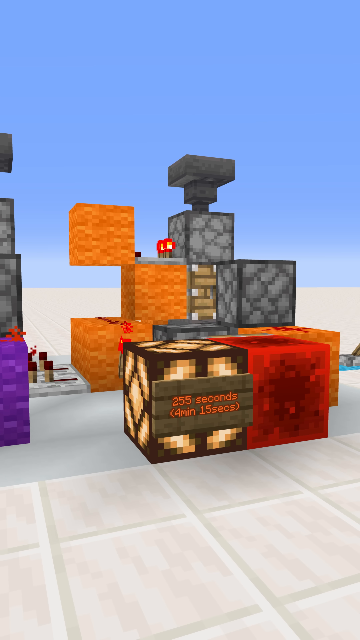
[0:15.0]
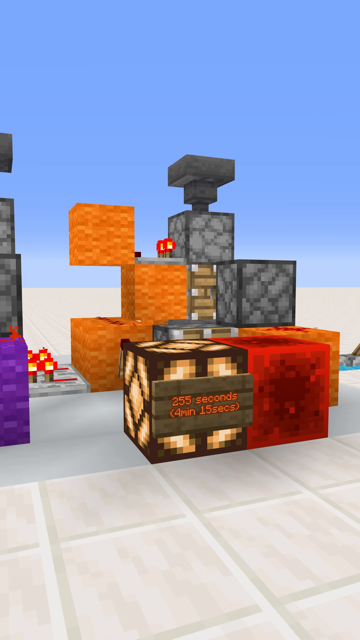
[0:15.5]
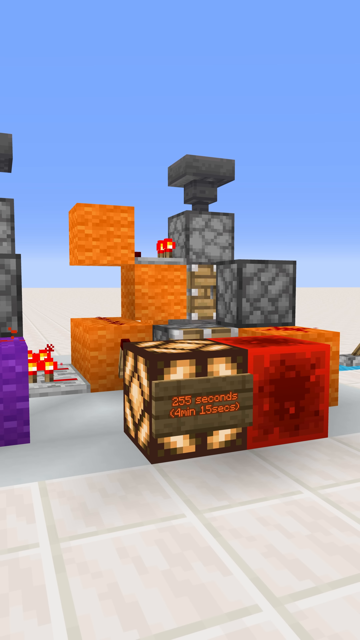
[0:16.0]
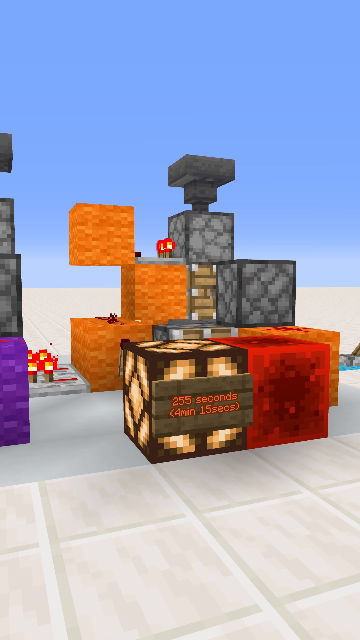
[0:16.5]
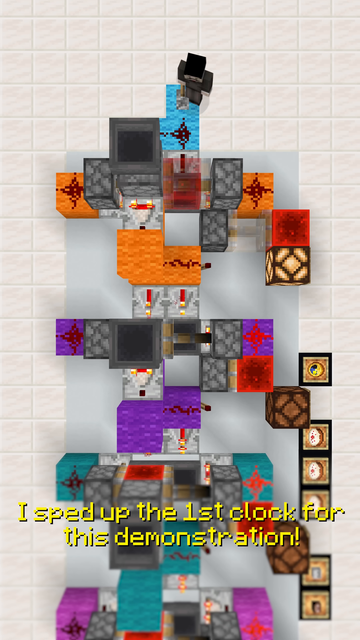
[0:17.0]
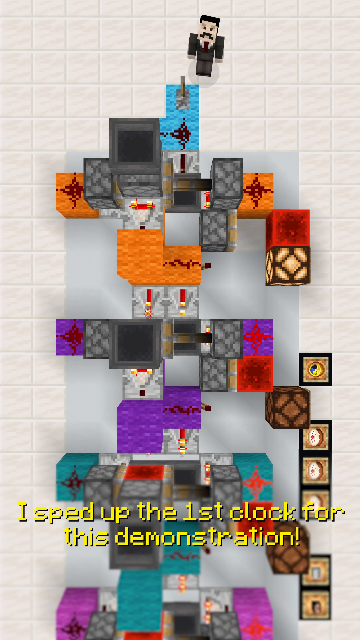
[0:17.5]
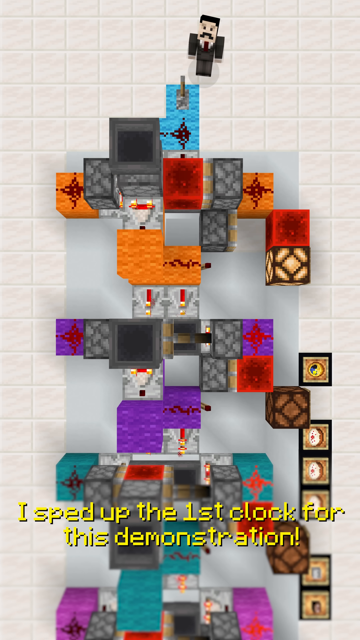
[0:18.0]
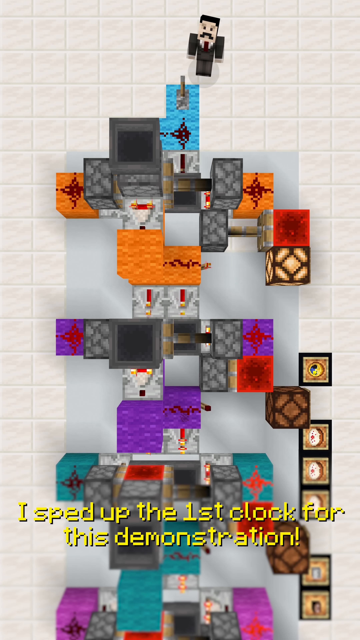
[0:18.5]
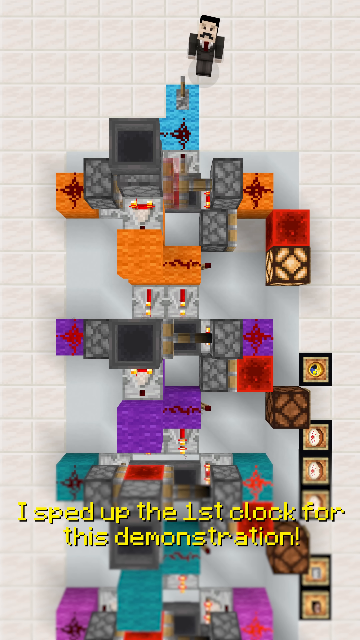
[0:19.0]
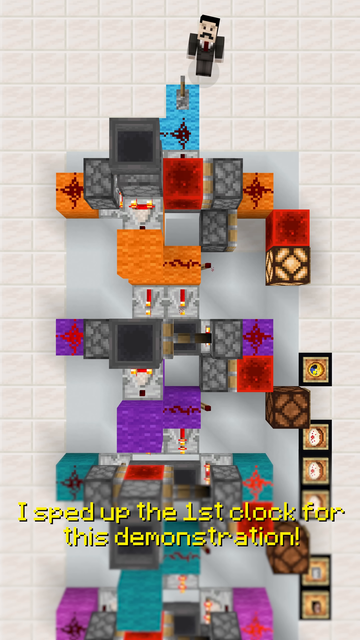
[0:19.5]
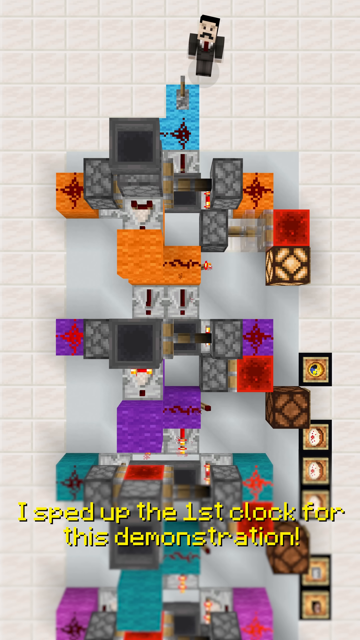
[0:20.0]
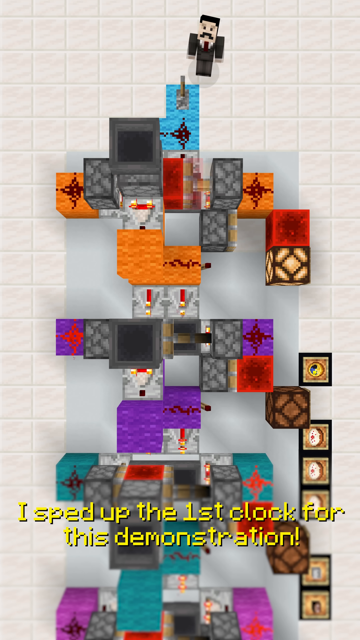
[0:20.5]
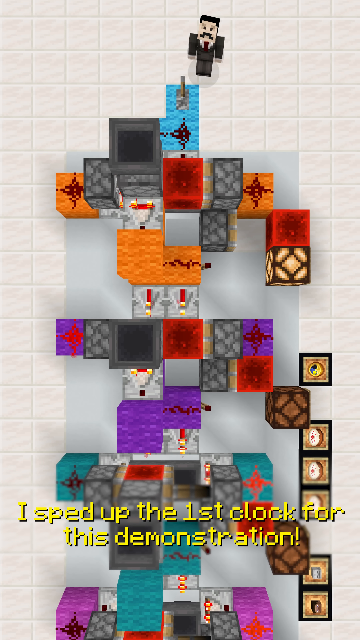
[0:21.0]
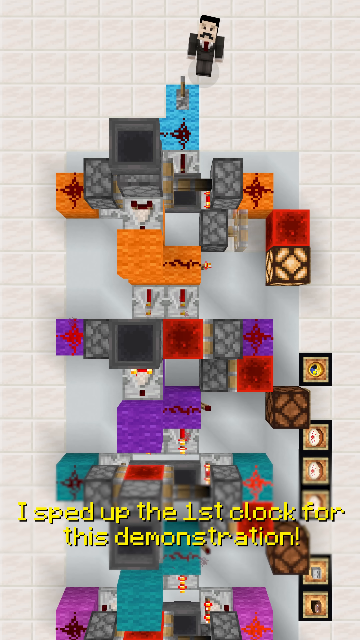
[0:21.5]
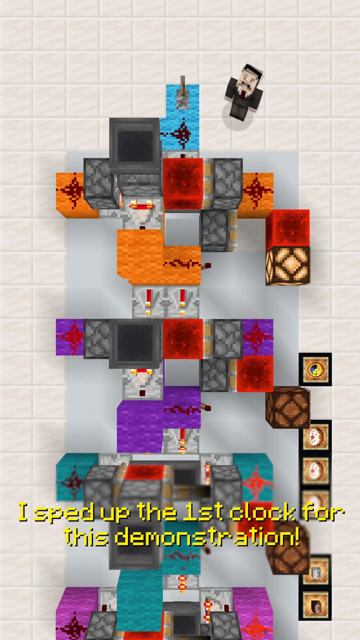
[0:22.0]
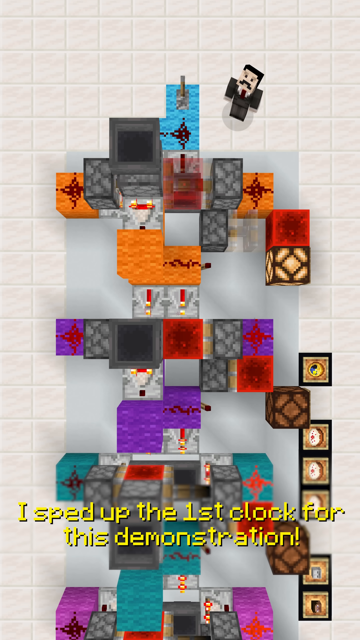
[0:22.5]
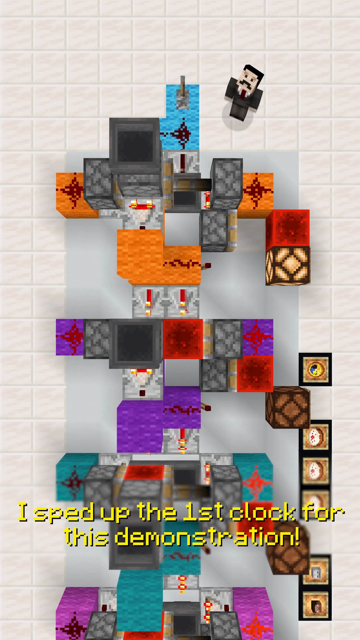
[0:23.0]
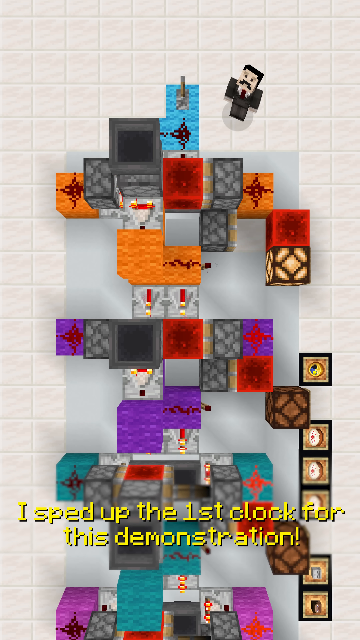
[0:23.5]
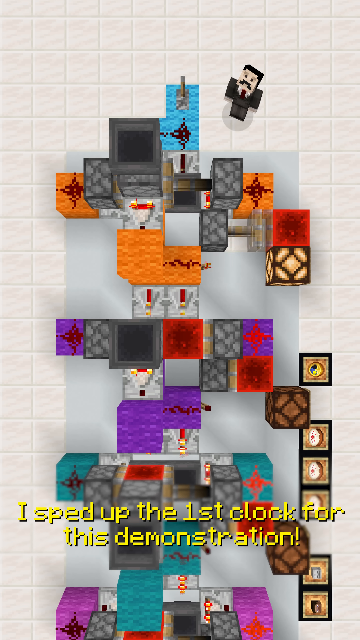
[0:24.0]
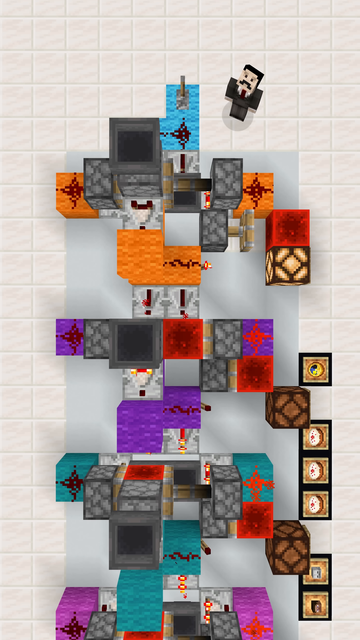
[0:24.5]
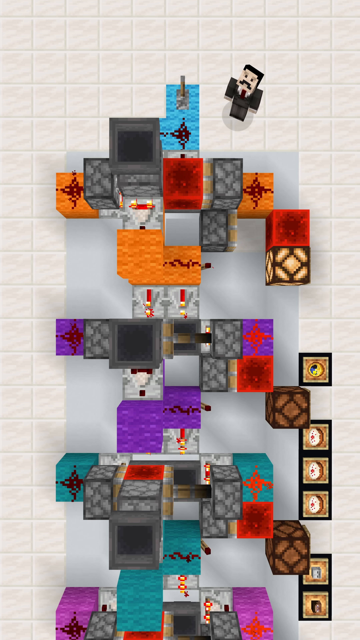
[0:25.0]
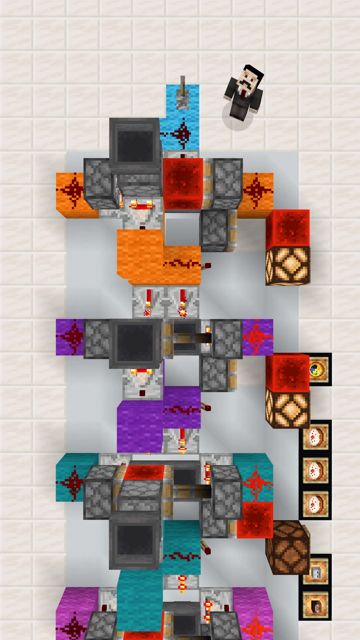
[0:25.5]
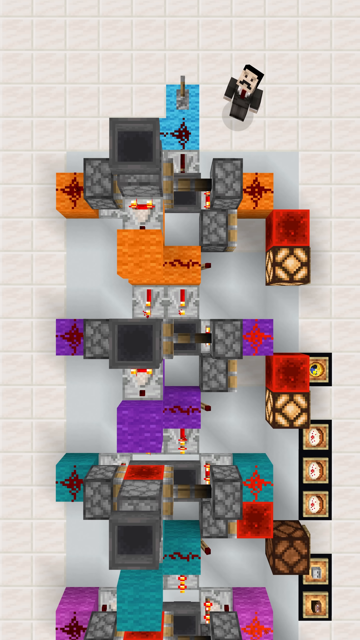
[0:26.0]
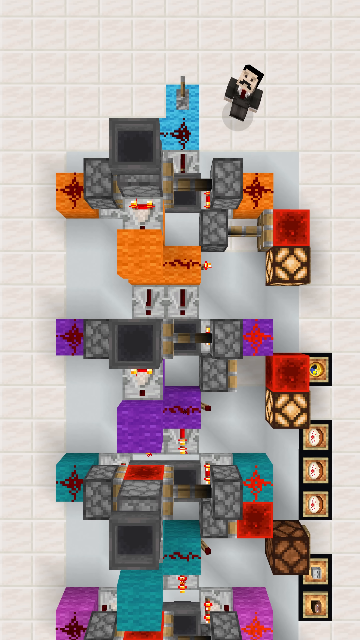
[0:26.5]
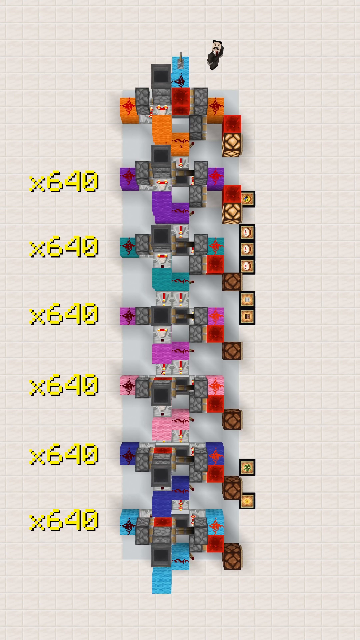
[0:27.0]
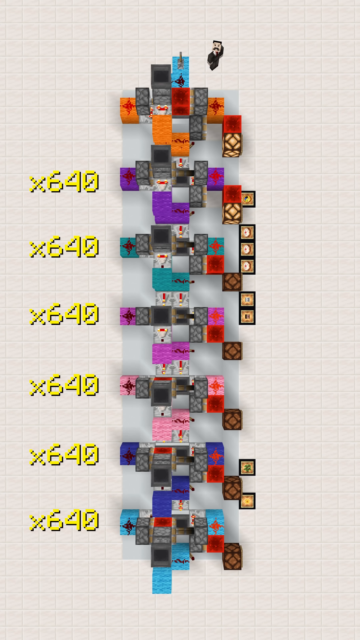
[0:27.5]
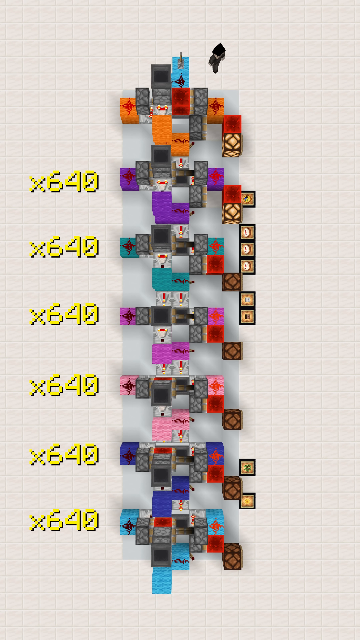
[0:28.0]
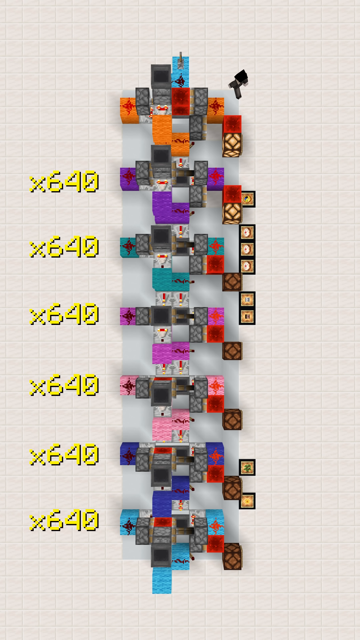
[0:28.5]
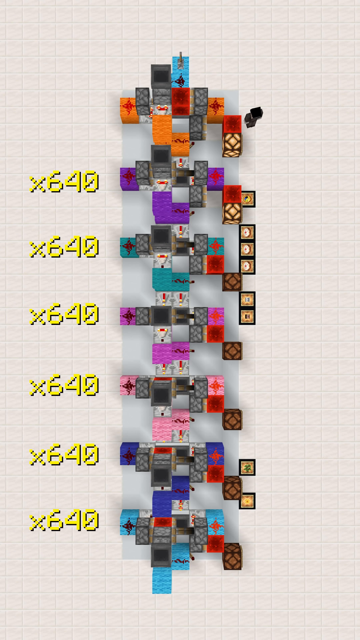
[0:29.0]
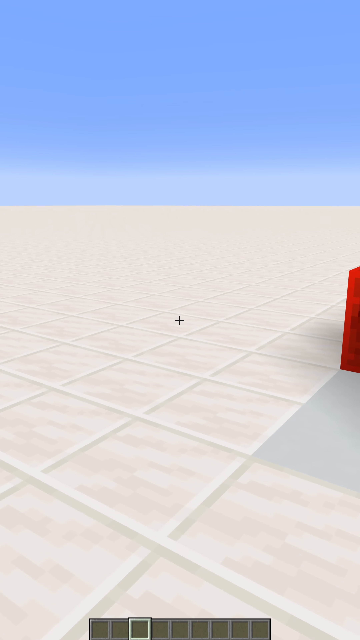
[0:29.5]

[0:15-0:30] An overhead view shows the game board. Some of the blocks are blinking, apparently the red ones, while the other blocks do nothing. The male character is back and is looking up. He moves quickly a bit to his left, the viewer's right. A line of numbers, "x640", appears six times from top to bottom. The view is a little further from the game now, and the character starts to move to his left, appearing to begin to run and sprint around the blocks without touching any of them. The view then switches to ground level, moving in the direction the character moved; the character is not visible, only a crosshair. The view moves around the side of the game on the white tiles, with some of the blocks blinking.